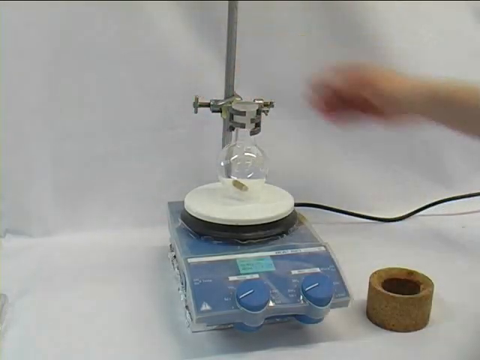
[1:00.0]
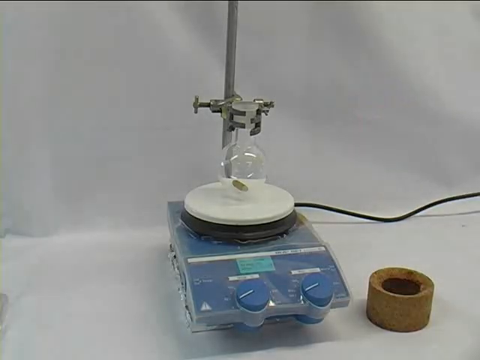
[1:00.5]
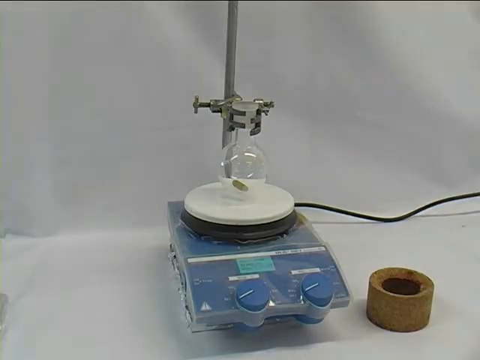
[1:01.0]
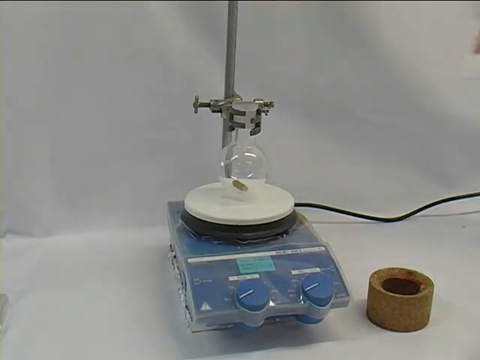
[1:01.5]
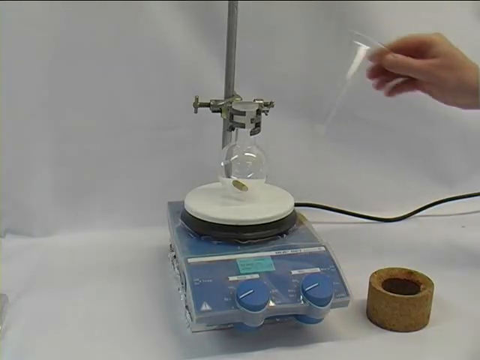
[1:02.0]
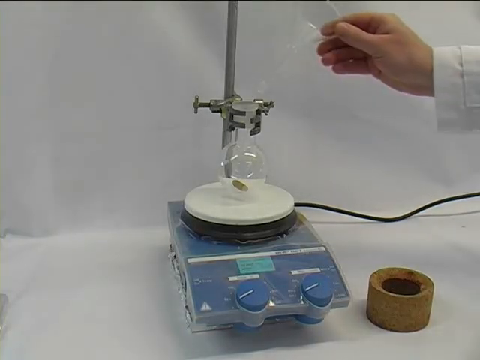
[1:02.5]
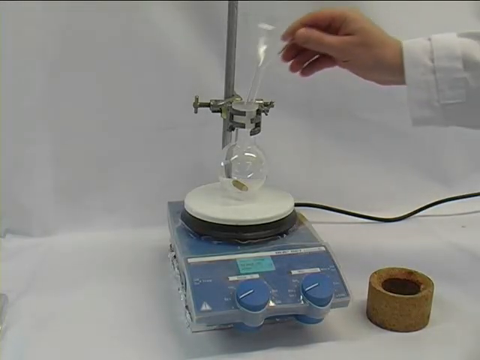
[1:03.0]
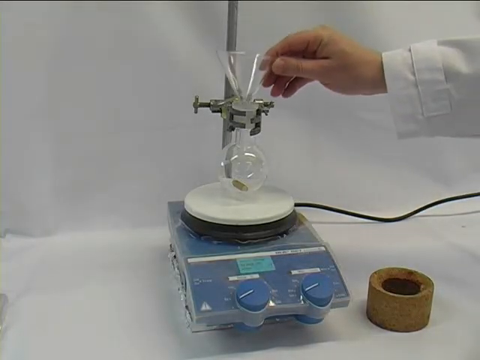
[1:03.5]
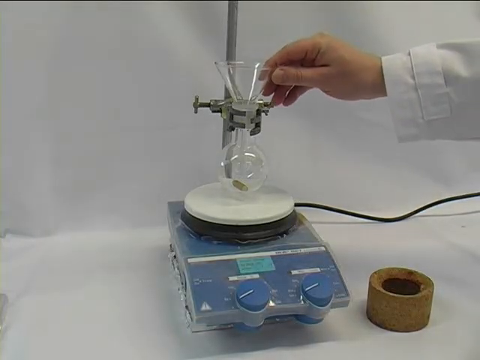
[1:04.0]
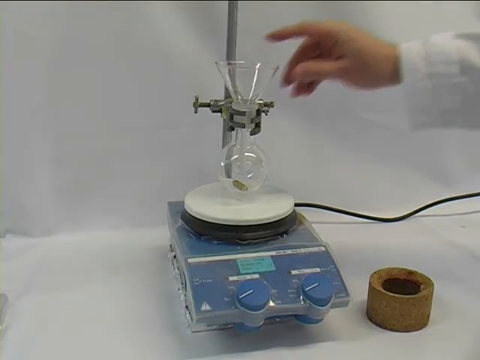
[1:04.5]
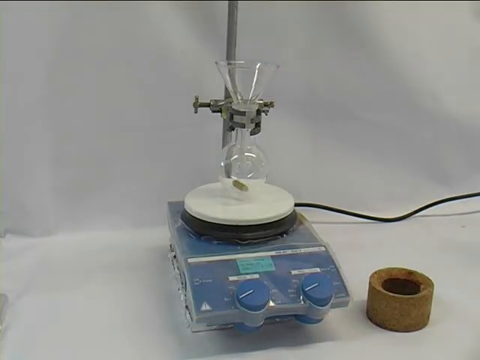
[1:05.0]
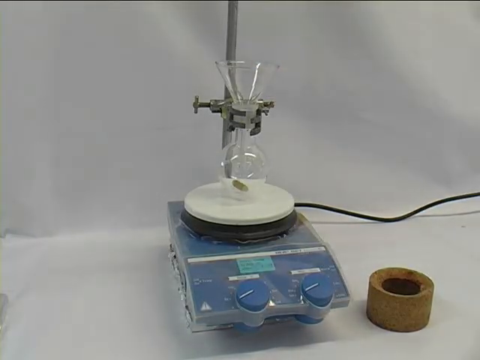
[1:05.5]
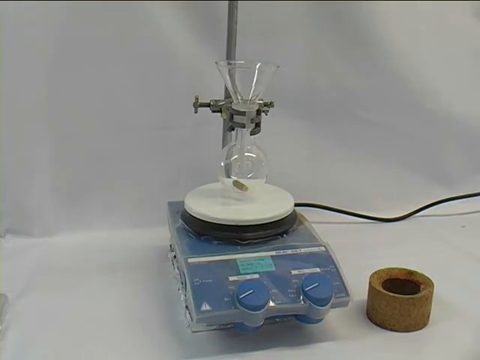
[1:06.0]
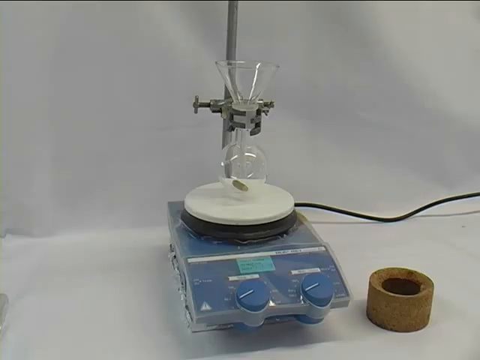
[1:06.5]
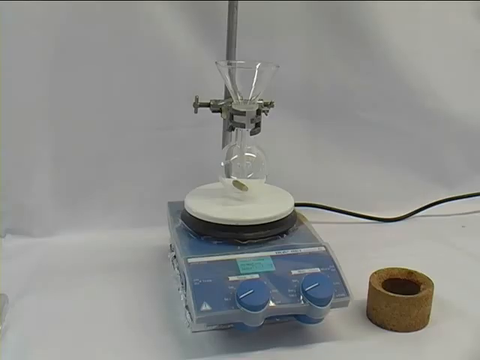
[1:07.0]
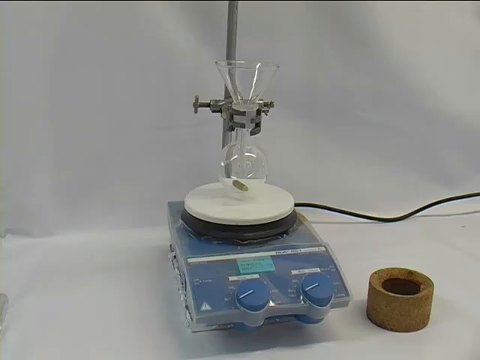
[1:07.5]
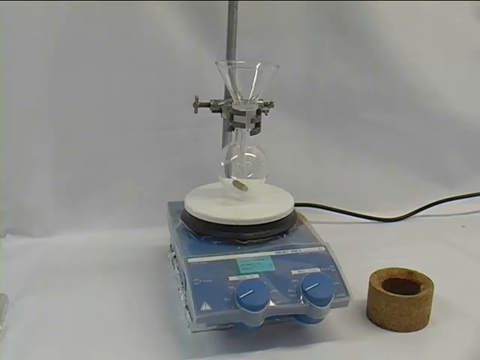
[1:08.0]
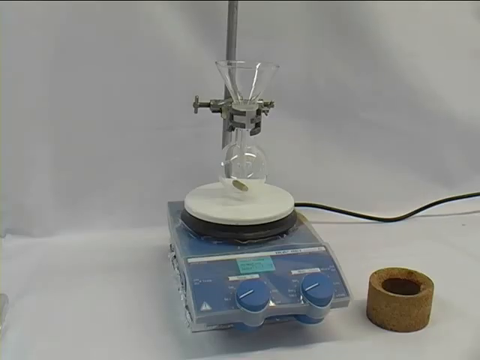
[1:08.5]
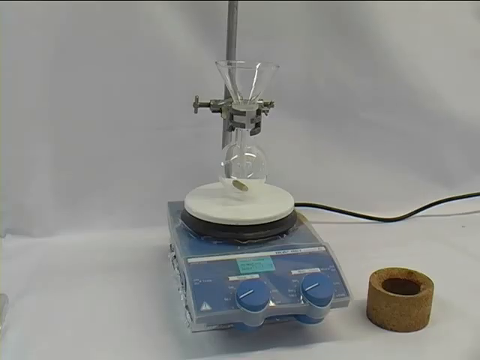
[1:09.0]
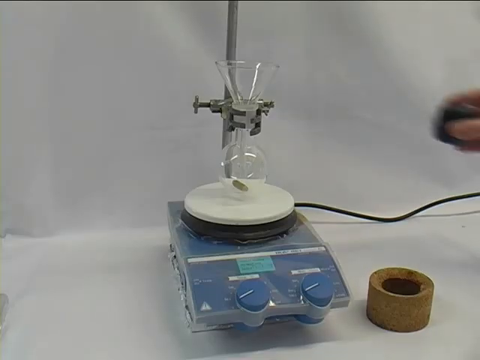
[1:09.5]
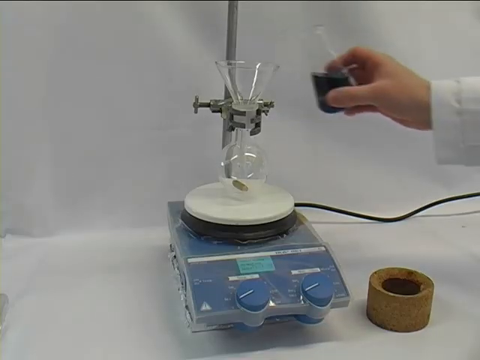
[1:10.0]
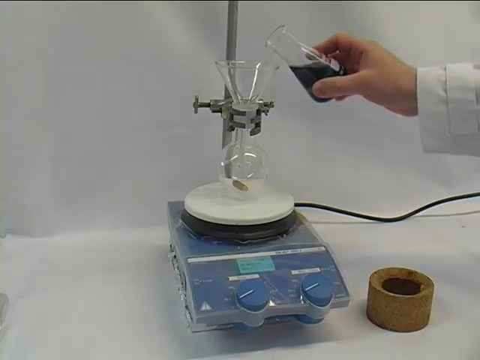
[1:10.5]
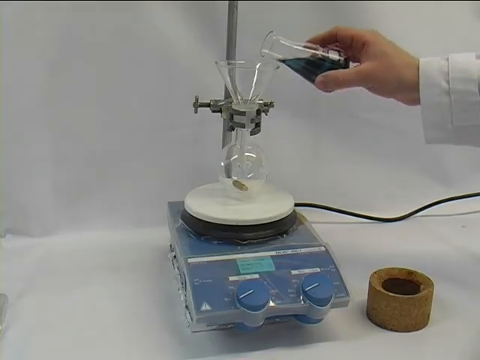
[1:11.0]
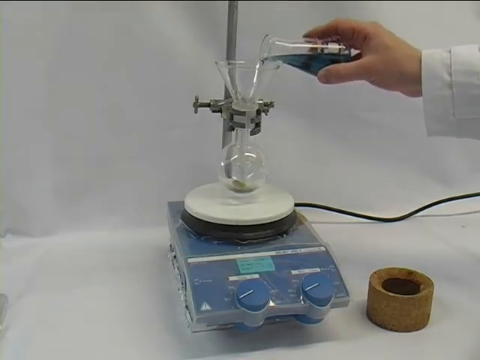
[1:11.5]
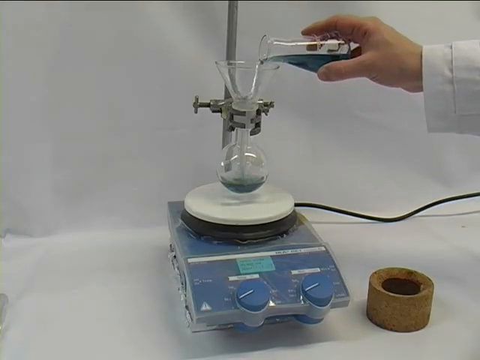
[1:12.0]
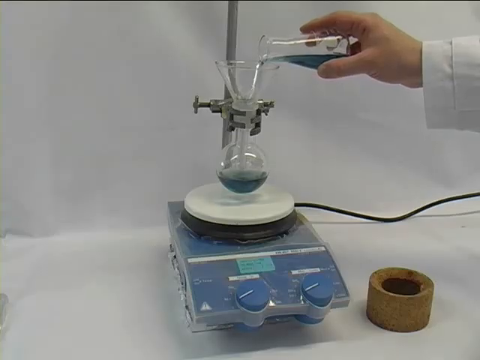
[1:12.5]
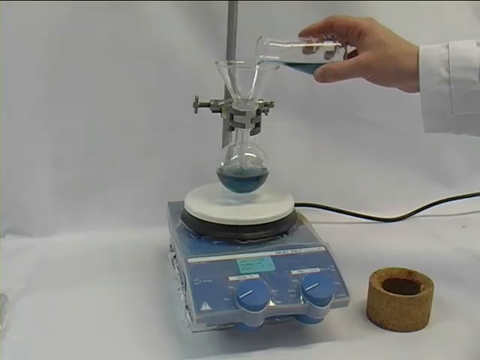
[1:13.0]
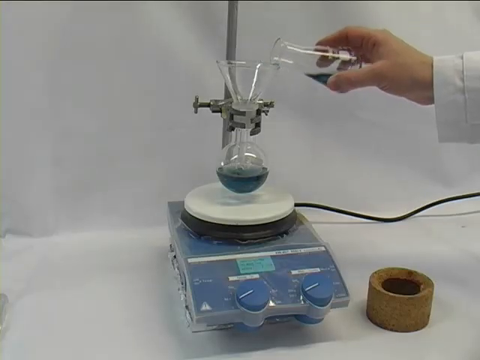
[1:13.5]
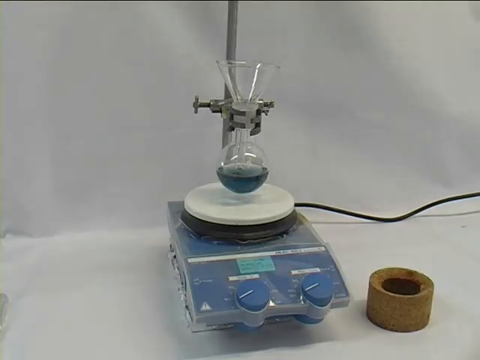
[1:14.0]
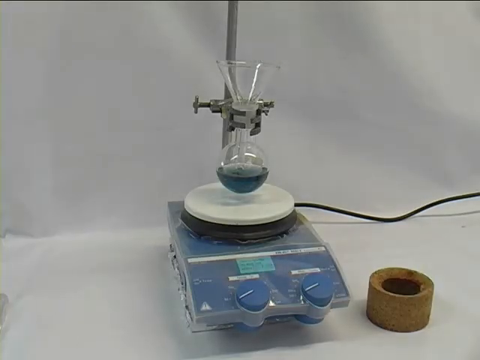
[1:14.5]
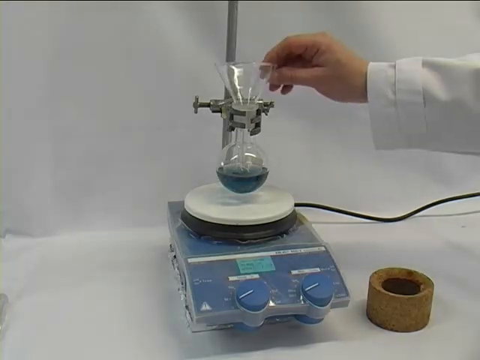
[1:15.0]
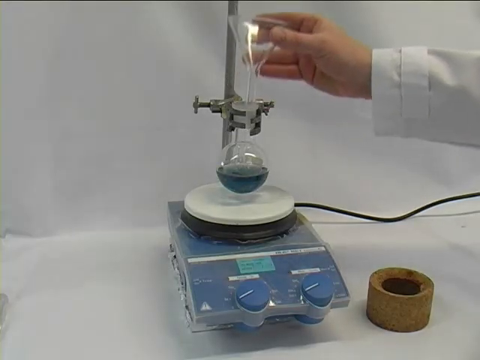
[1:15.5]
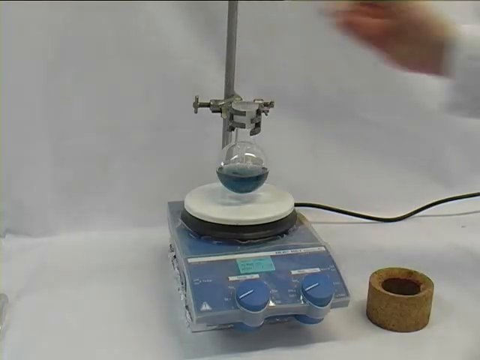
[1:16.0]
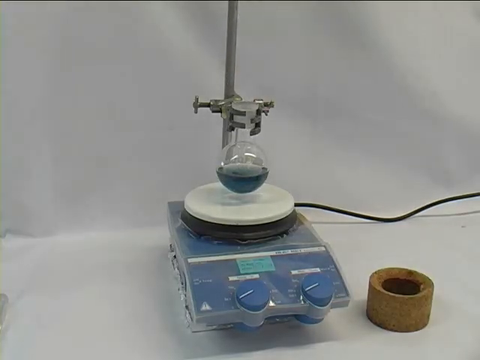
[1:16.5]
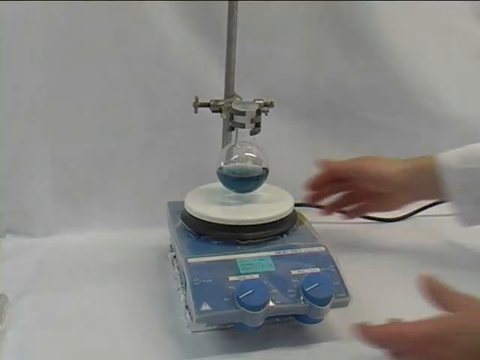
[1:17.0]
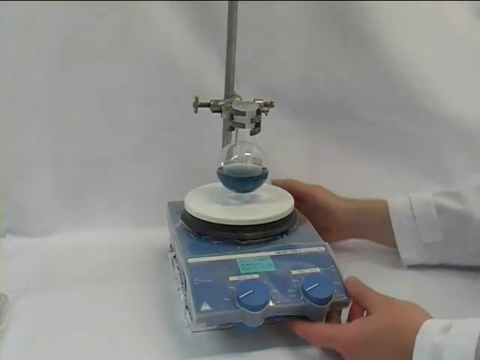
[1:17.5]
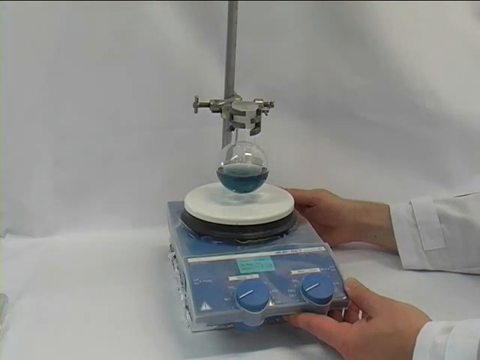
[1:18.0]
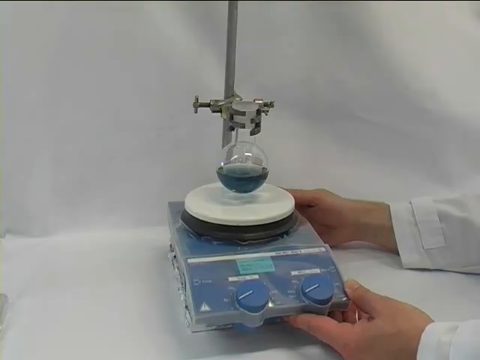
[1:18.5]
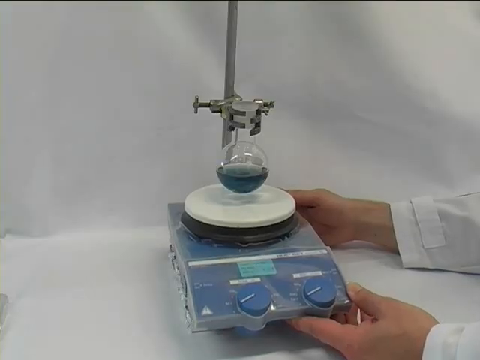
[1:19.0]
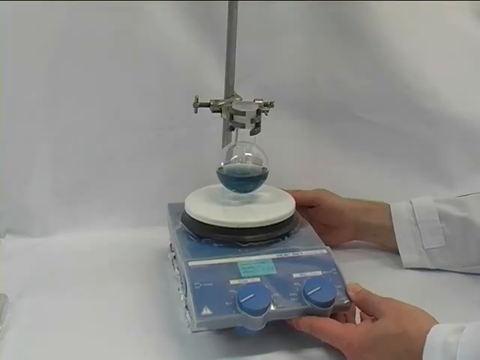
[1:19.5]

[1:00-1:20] A blue machine has blue knobs with white lines pointing to different settings. On top of the machine is what looks like a white circular table. An electric cord comes out of the back of the machine and goes off to the right along the wall. The wall and the table the machine is sitting on are white. A metal rod comes out of the back of the machine, and attached to it is some kind of clamp holding a vial with what appears to be a capsule inside. The person with white hands puts a funnel on top of the vial and pours a dark blue fluid into the vial through the funnel. They remove the funnel and adjust the bottom of the machine. To the right of the machine on the table is something circular and cylindrical that looks like it is made of cork.